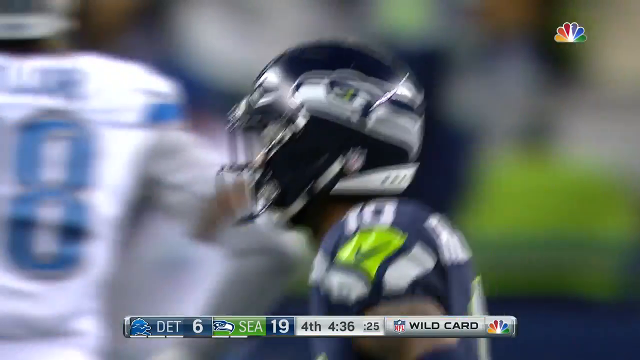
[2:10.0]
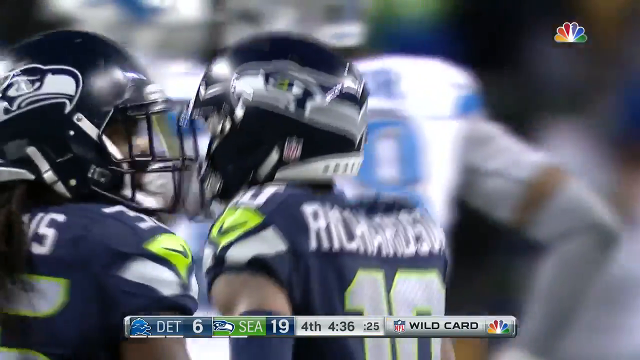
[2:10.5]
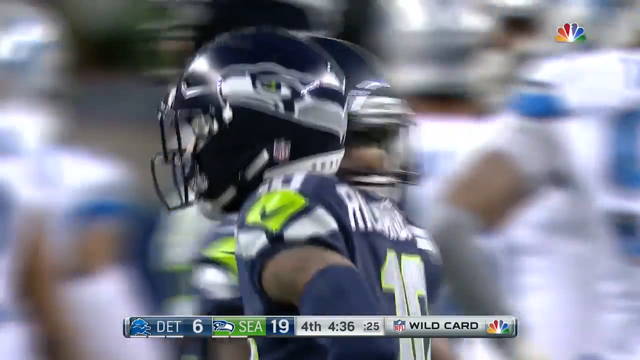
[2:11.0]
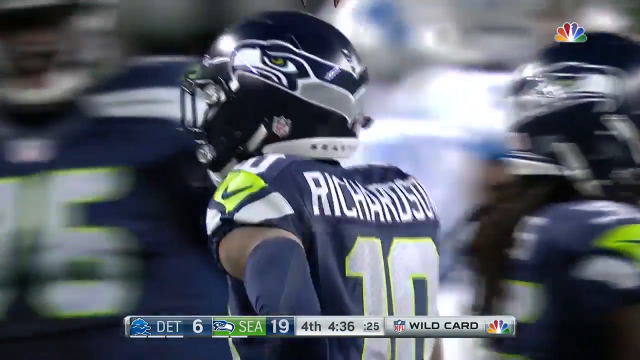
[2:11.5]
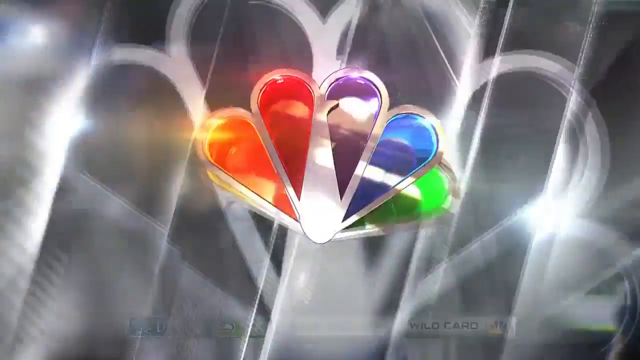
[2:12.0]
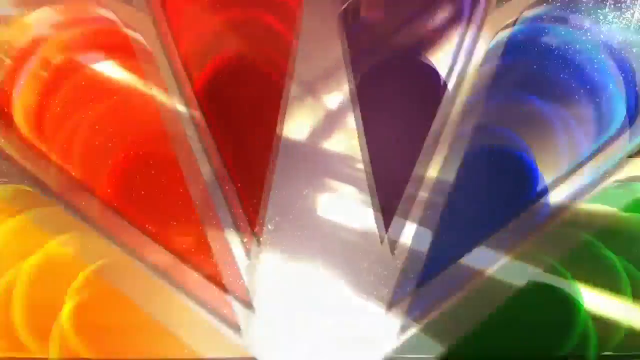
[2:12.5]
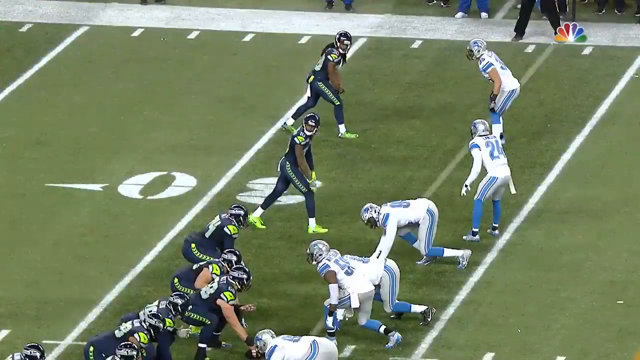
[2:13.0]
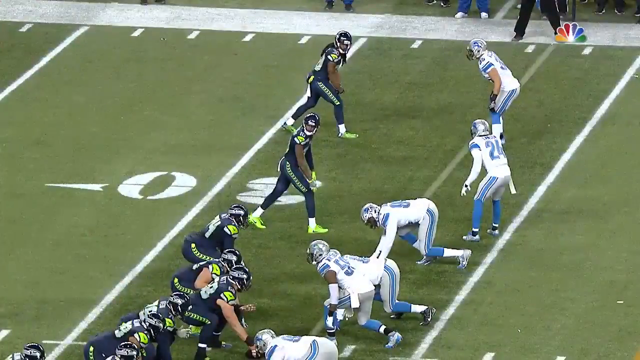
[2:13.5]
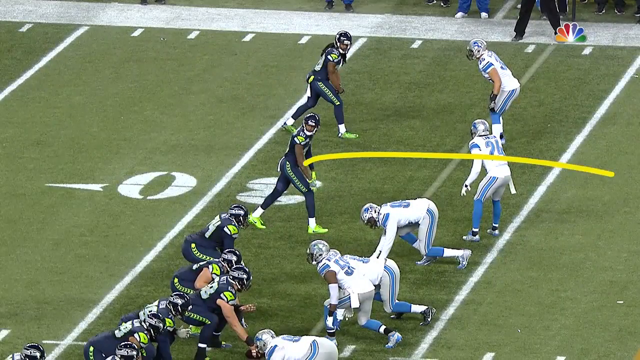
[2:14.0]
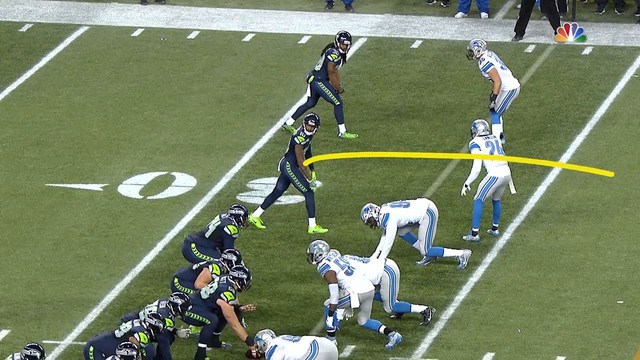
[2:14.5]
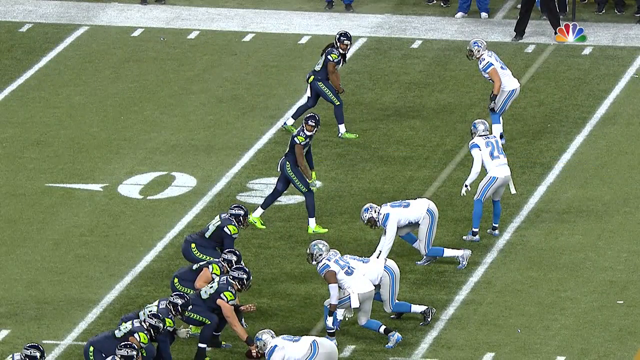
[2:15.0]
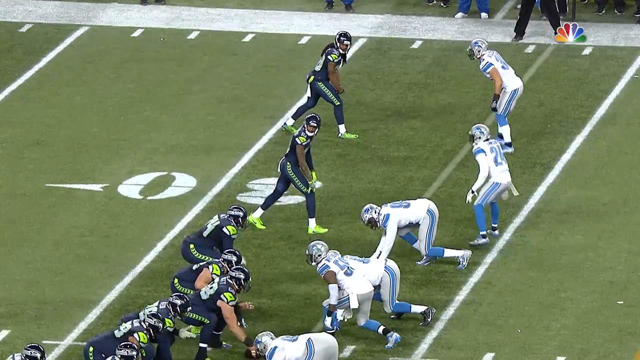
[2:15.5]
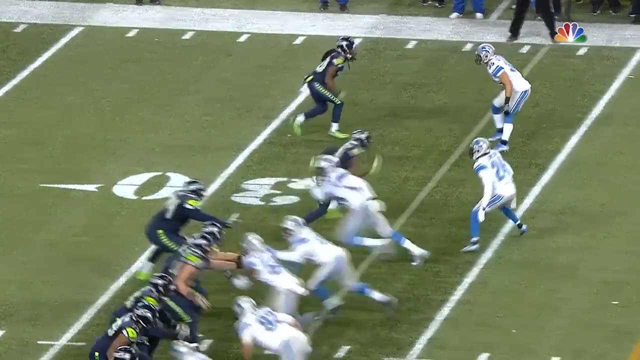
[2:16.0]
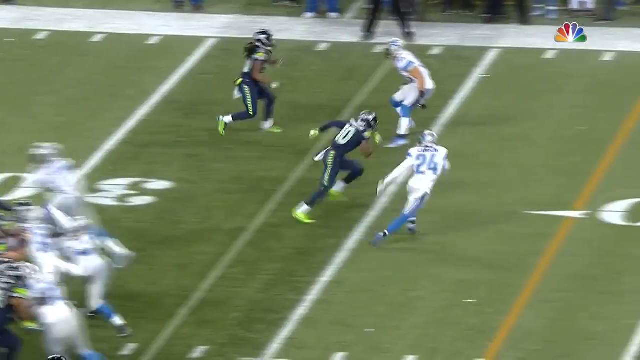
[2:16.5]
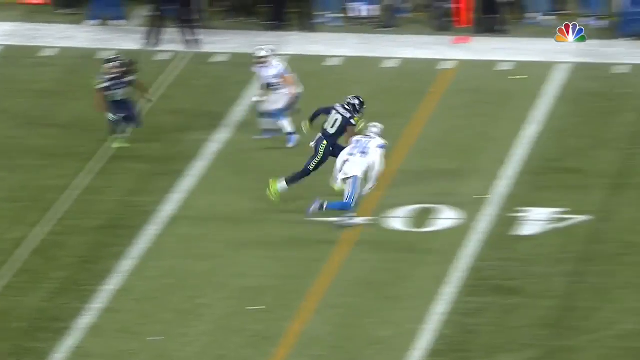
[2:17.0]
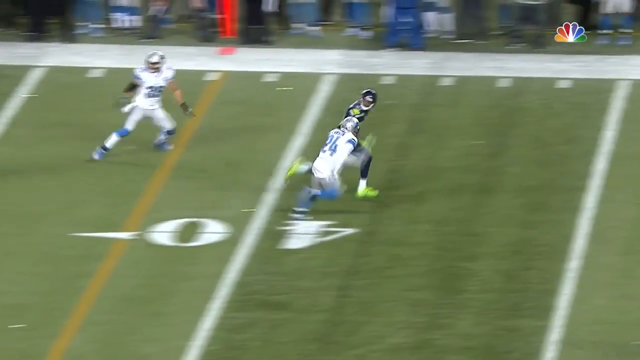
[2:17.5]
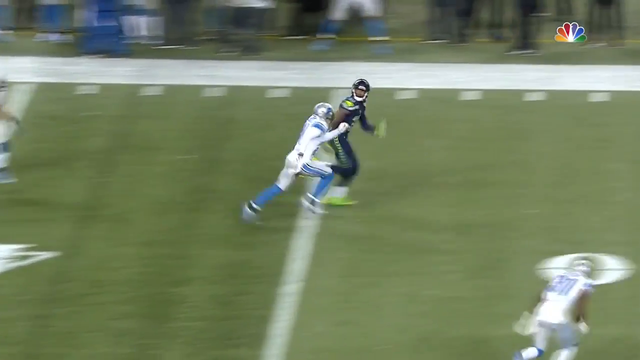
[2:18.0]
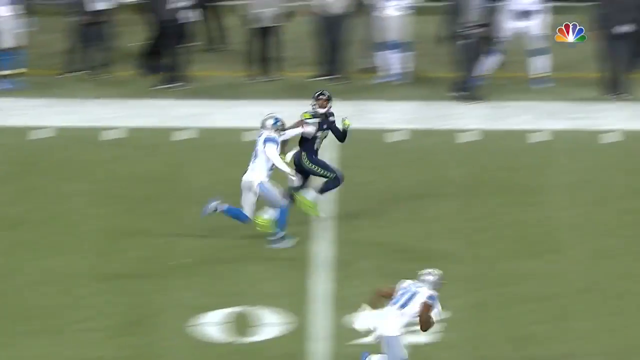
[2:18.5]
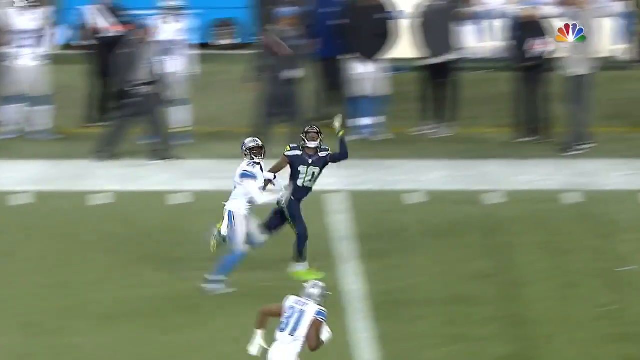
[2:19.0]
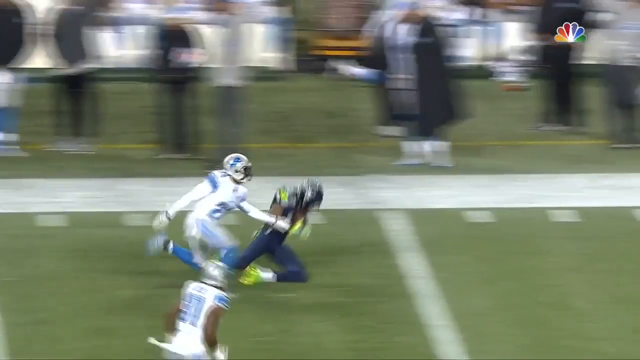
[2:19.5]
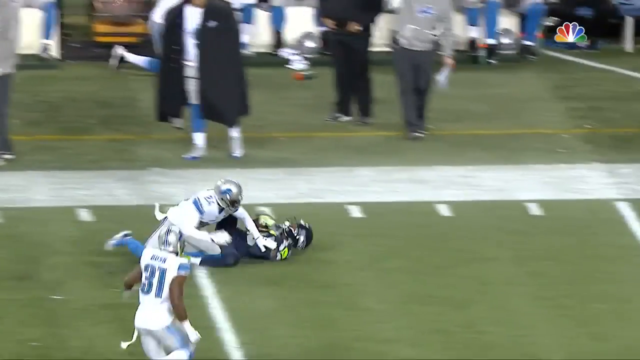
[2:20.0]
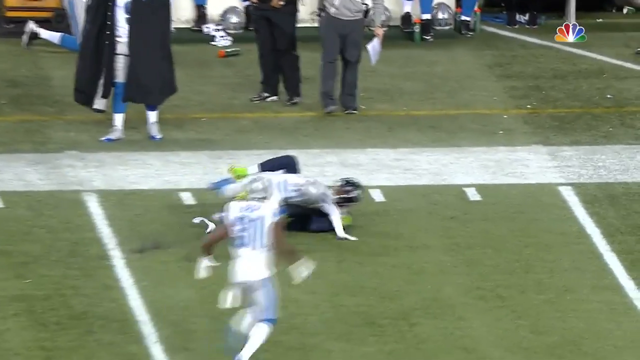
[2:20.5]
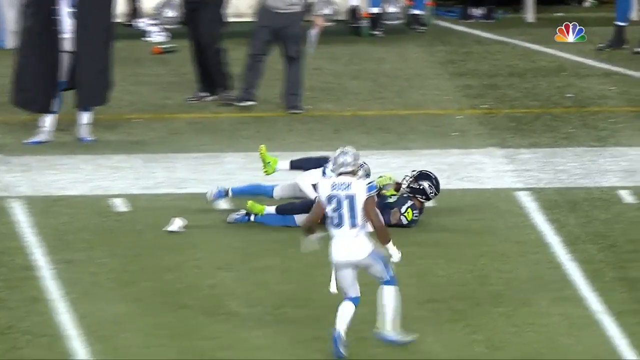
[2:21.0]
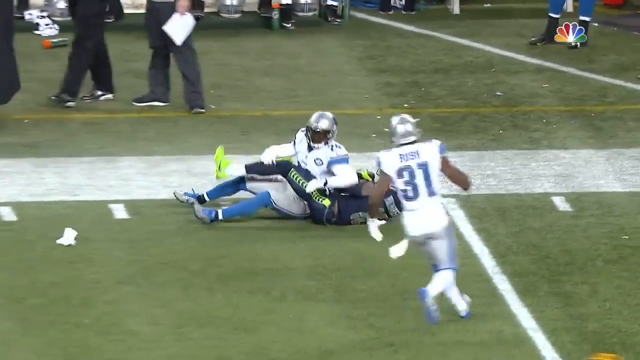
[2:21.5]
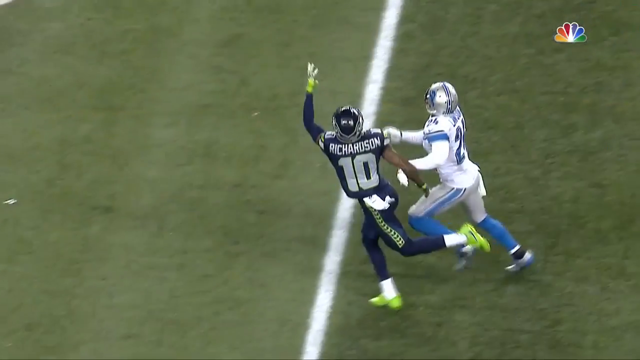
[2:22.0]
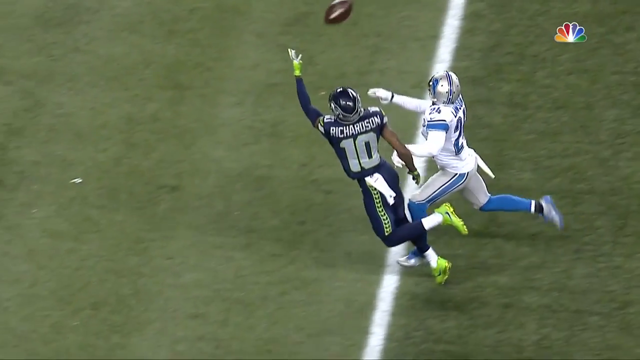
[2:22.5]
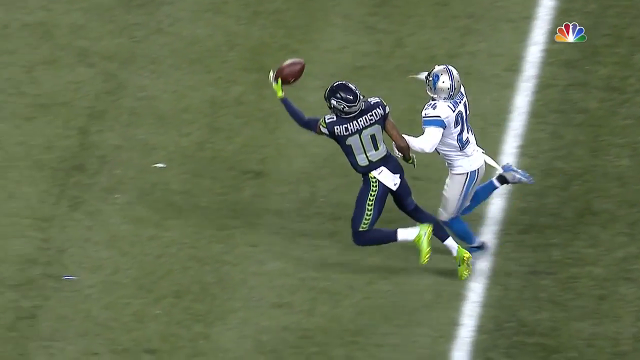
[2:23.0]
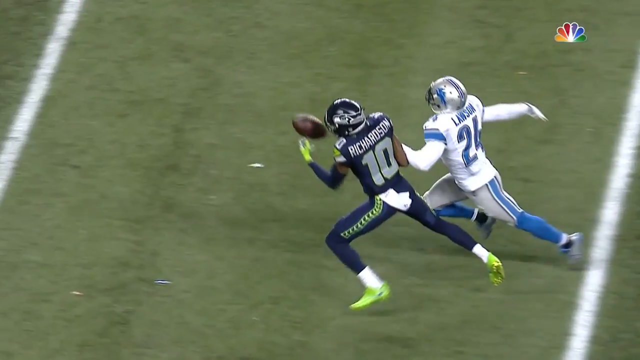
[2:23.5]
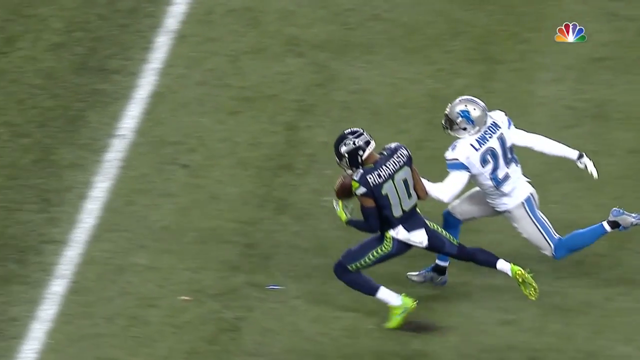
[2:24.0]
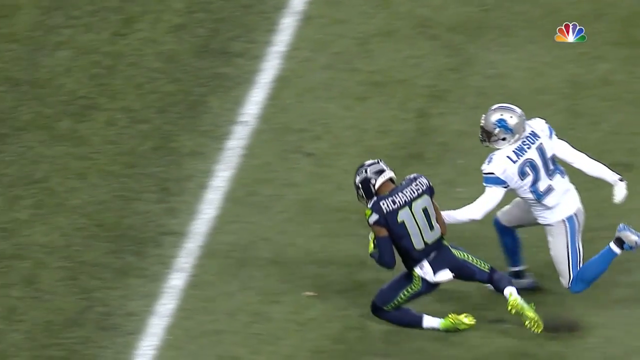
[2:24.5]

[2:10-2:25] Richardson, Seahawks number 10, who made all three catches, is shown very zoomed in from the side walking down the field, with only his upper torso and helmet visible. The NBC logo appears, followed by a replay showing the Seattle offensive line, Detroit's defensive line, and two receivers matched up with two Lions cornerbacks at the top of the screen. Richardson is the bottom wide receiver on the screen, and a curved yellow highlight line marks his route. As the play begins, Richardson runs right by Lions cornerback number 24 and makes a one-handed catch, shown mostly from a side angle, and both he and the Lions player fall to the ground. The play is then shown from the opposite angle, showing both players from behind as it unfolds.